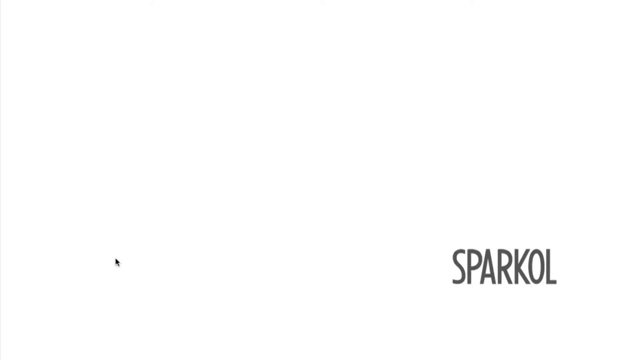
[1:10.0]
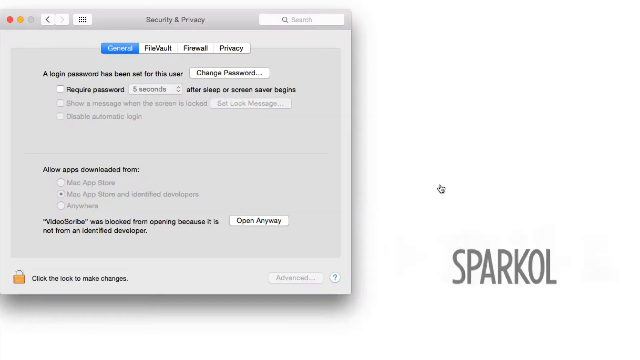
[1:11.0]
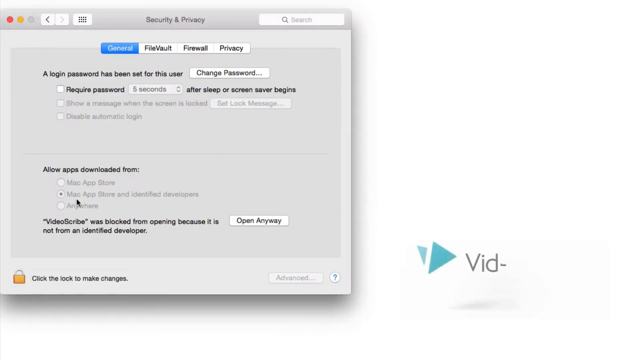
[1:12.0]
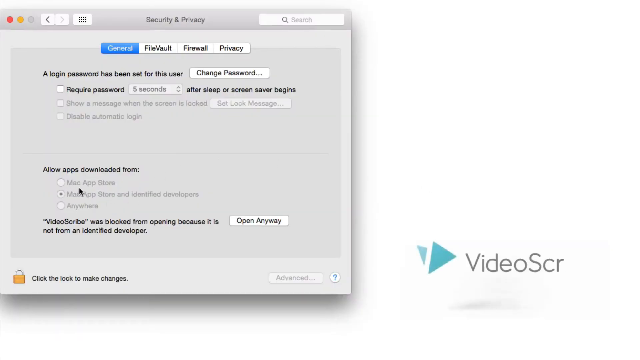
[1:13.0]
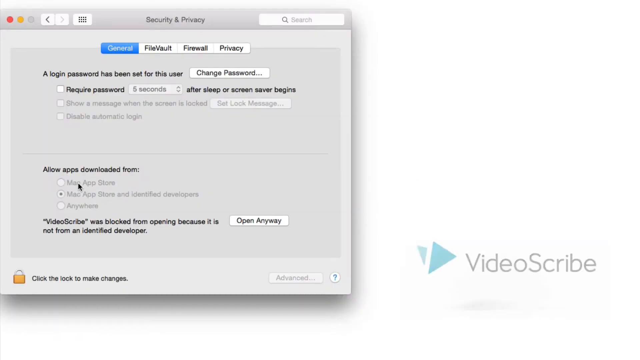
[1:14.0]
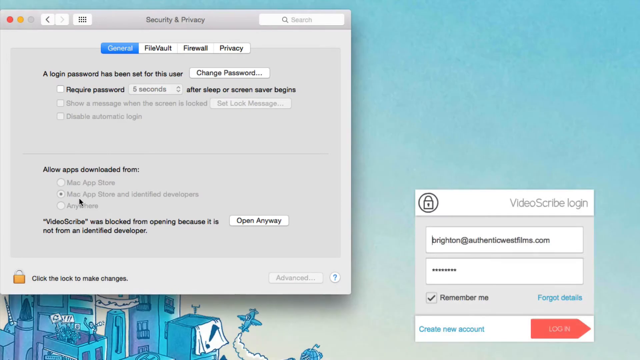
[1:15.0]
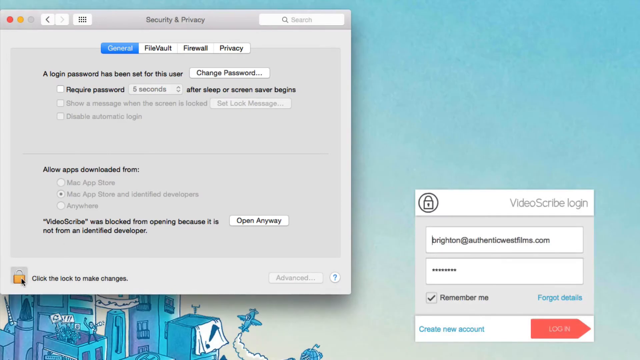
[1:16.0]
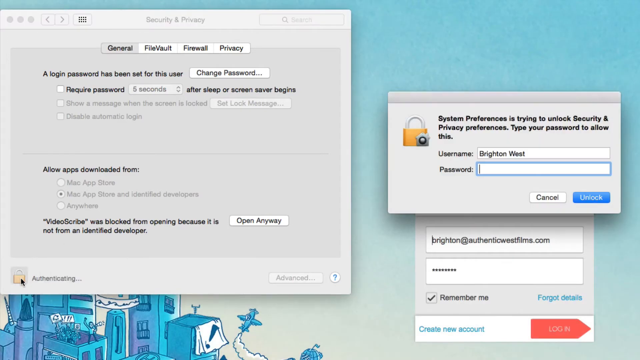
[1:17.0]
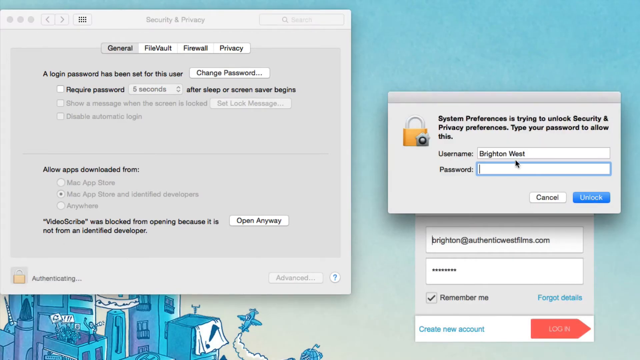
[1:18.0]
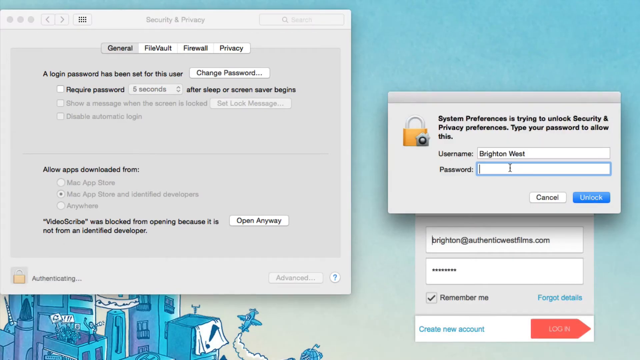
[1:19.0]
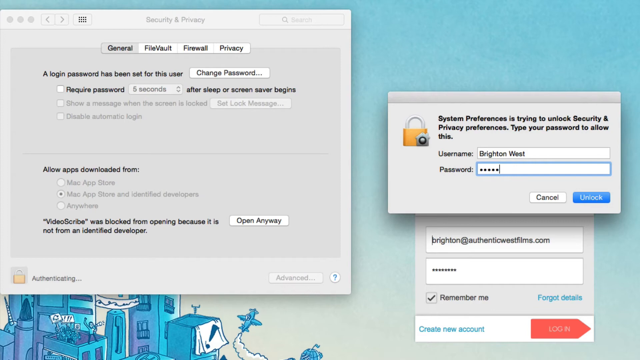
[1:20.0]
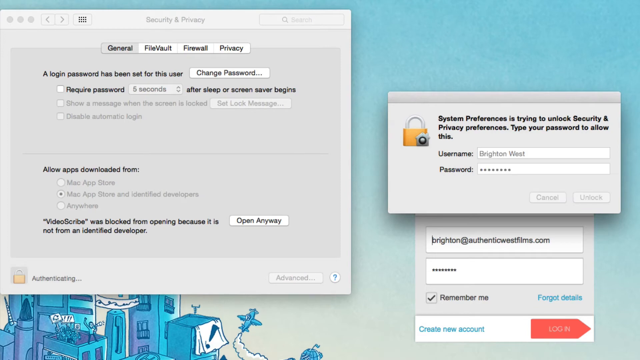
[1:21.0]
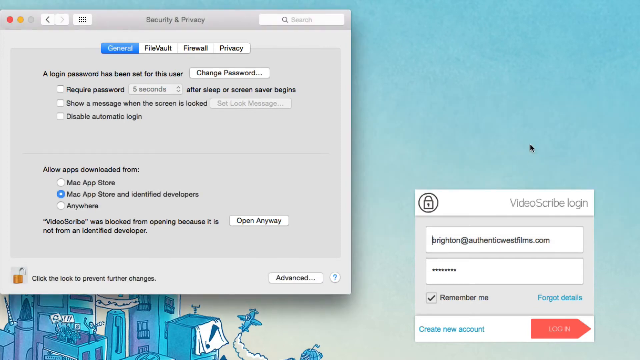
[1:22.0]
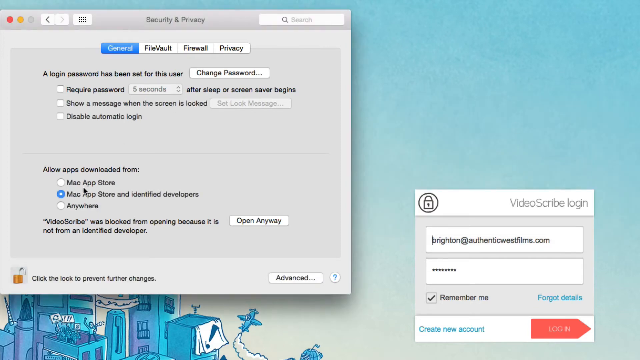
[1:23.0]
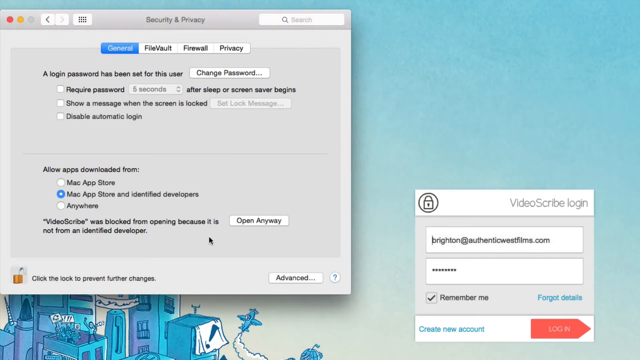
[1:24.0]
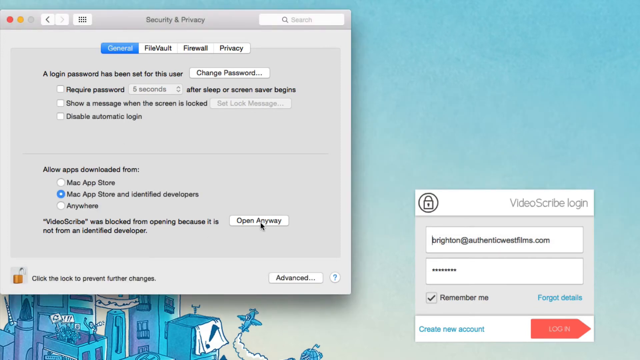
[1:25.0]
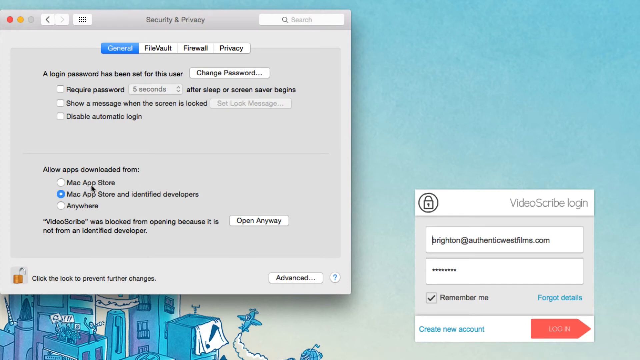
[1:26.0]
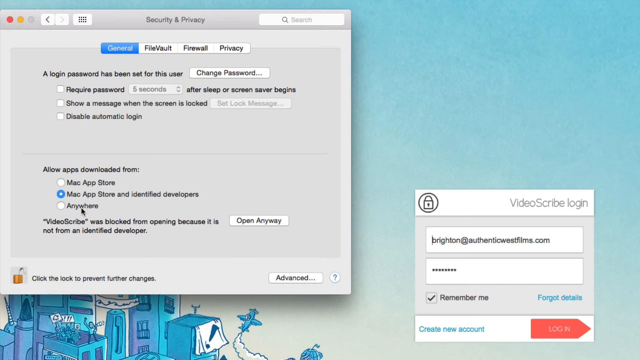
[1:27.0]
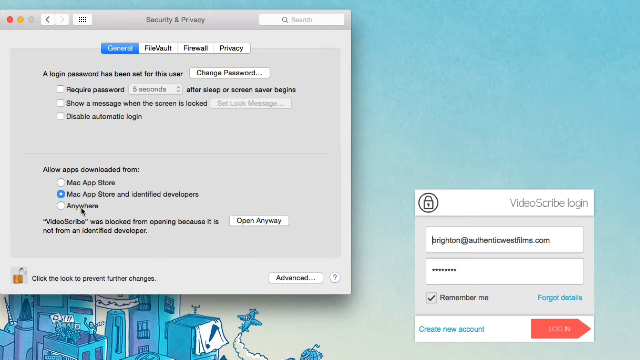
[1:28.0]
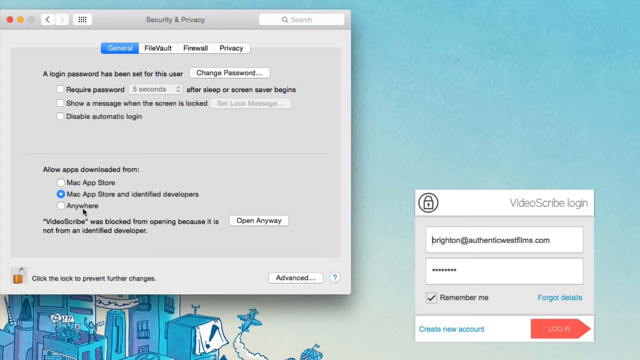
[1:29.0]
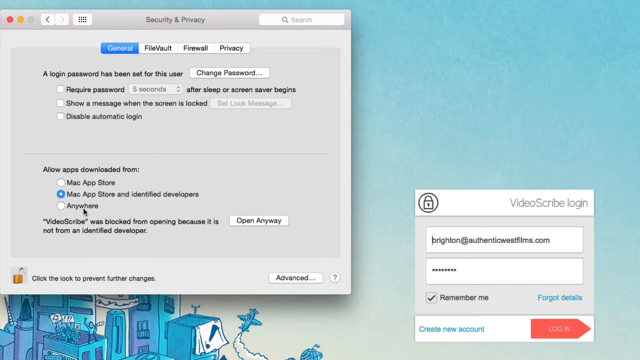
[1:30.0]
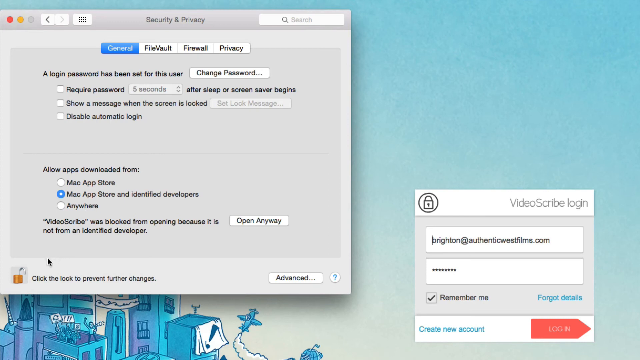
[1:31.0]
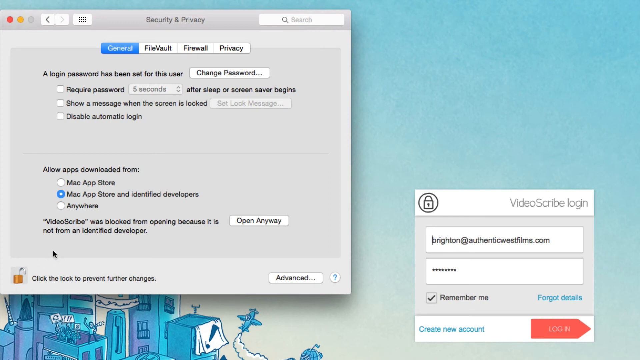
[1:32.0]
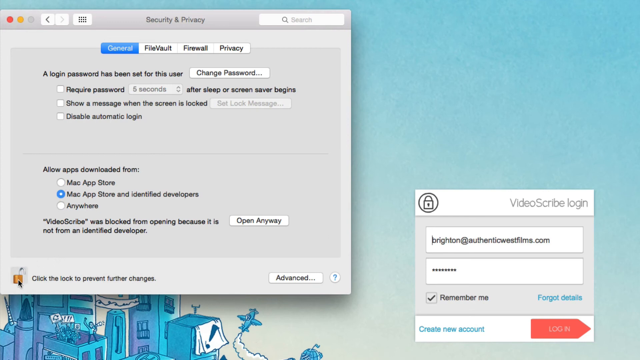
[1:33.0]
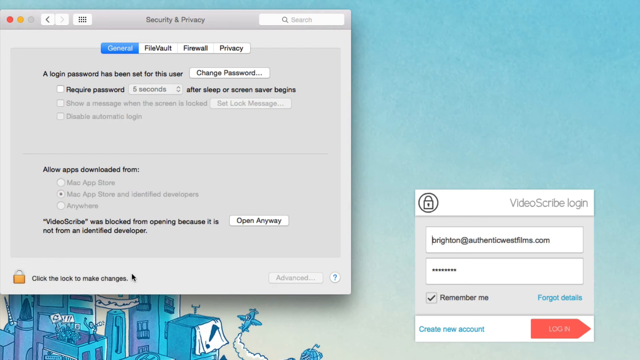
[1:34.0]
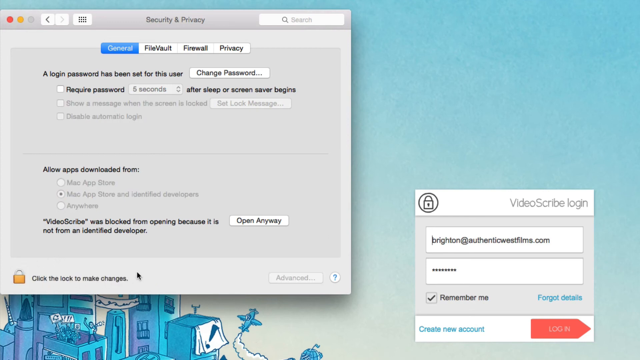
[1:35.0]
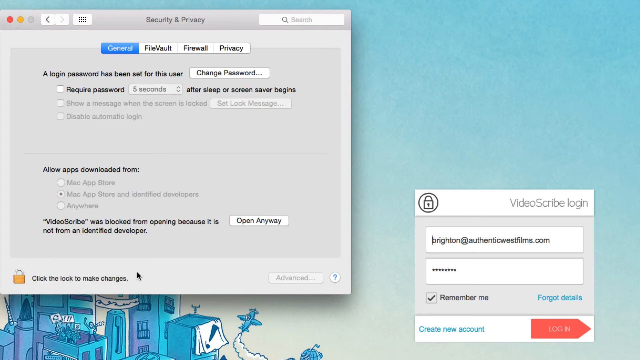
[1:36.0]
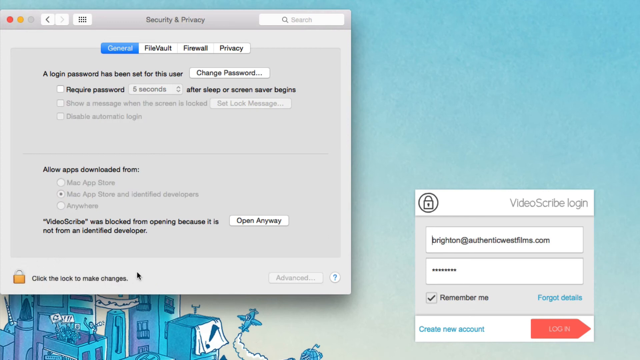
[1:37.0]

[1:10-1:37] The user navigates through the whole procedure for installing the VideoScribe application on the Mac, allowing the third-party application to run on macOS.